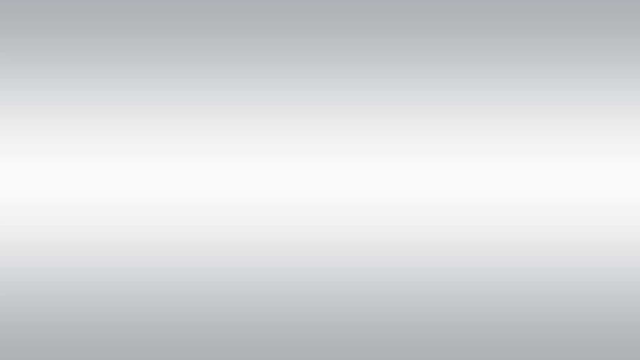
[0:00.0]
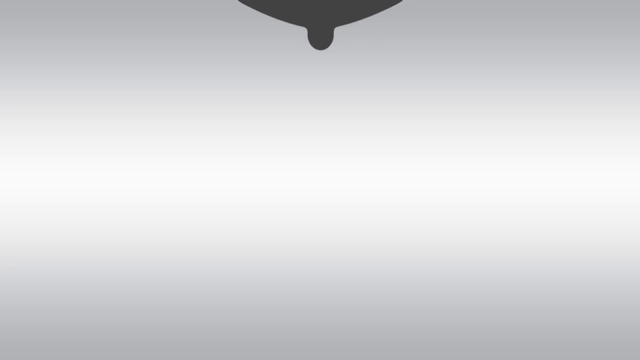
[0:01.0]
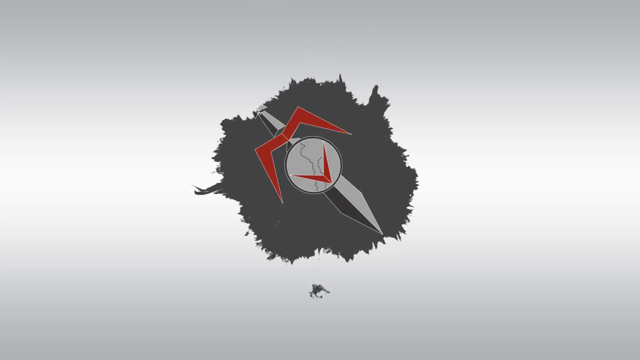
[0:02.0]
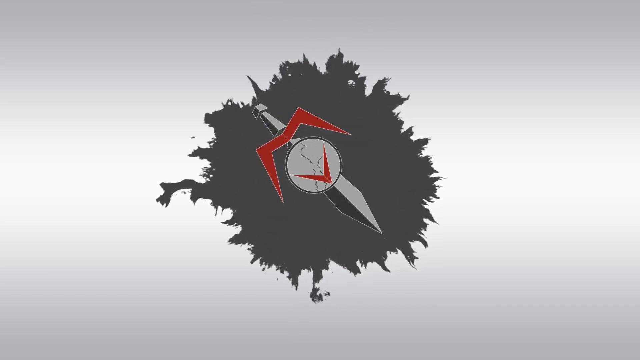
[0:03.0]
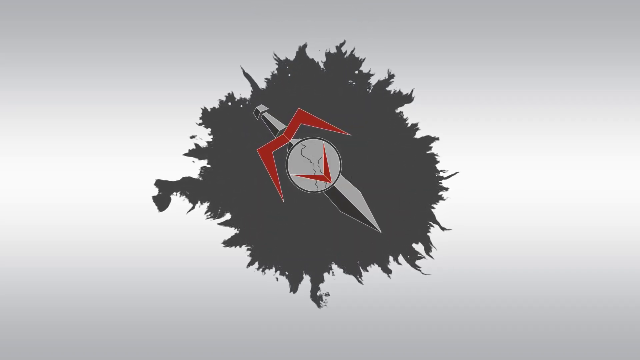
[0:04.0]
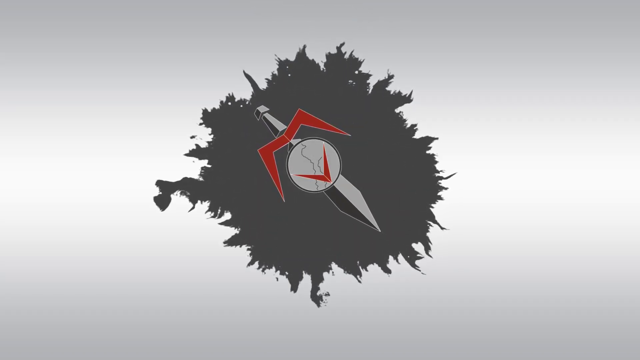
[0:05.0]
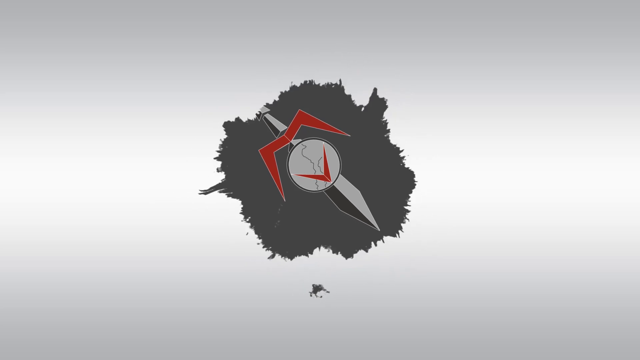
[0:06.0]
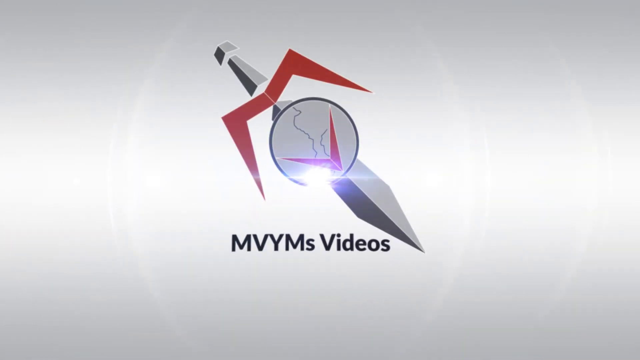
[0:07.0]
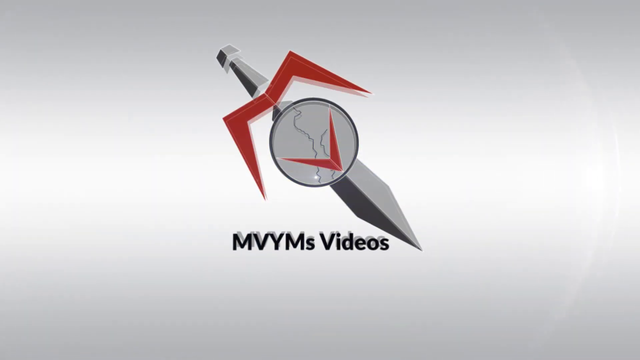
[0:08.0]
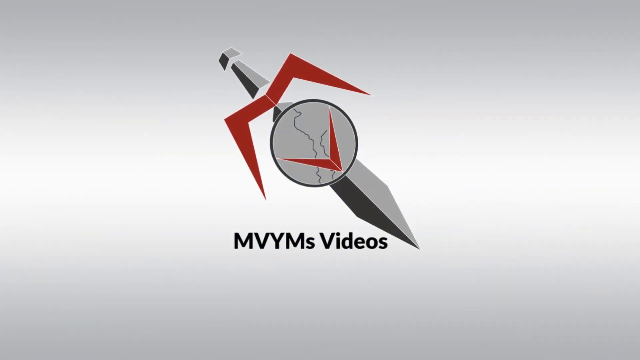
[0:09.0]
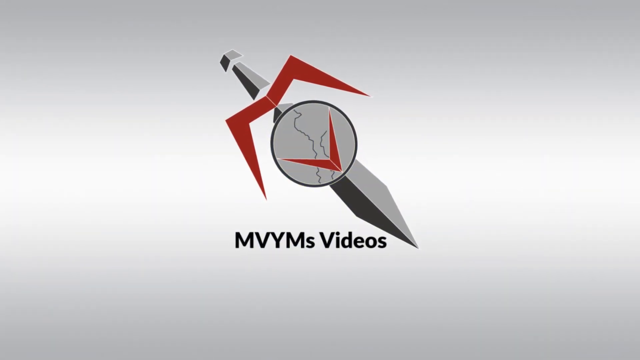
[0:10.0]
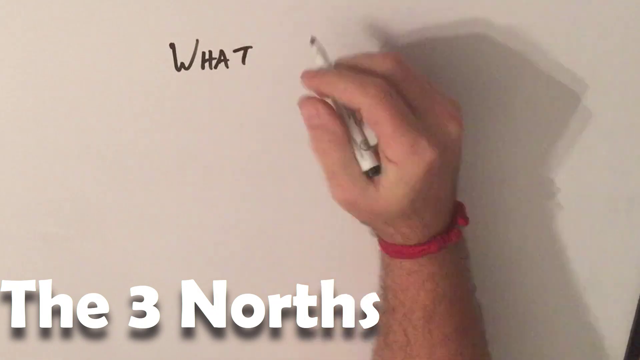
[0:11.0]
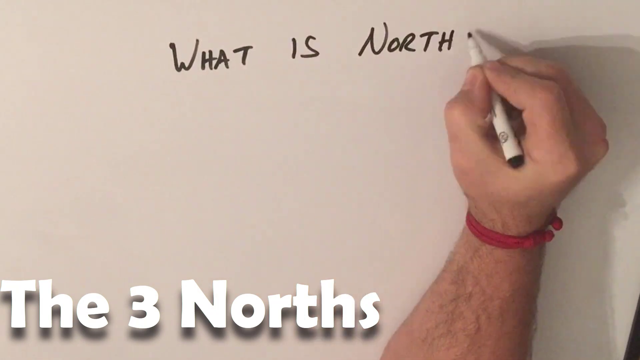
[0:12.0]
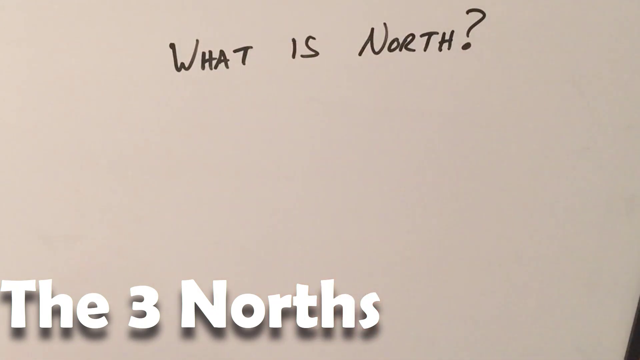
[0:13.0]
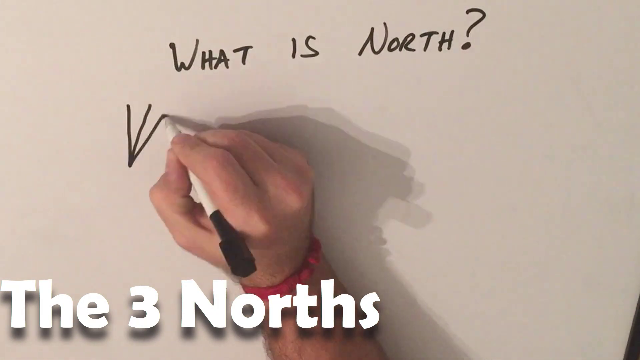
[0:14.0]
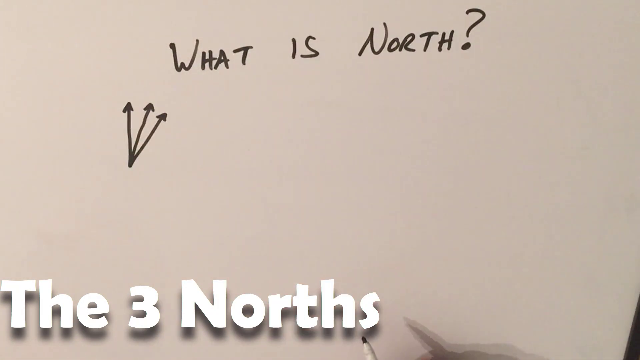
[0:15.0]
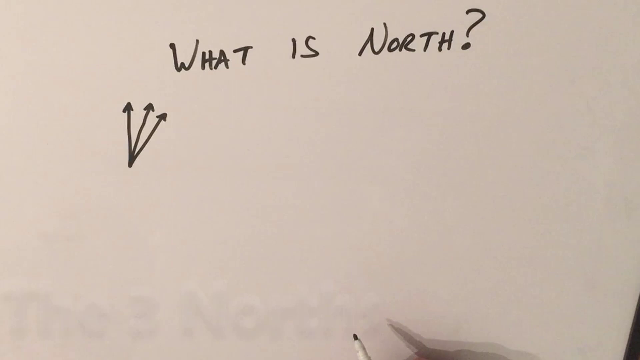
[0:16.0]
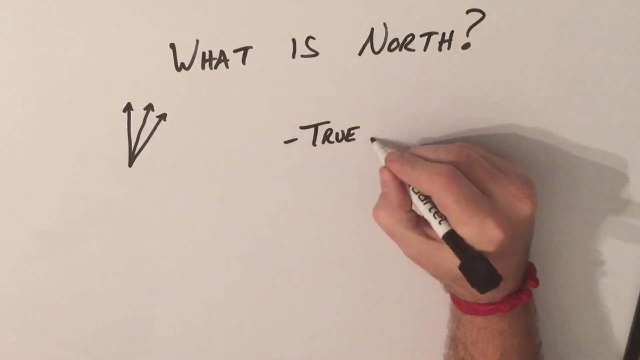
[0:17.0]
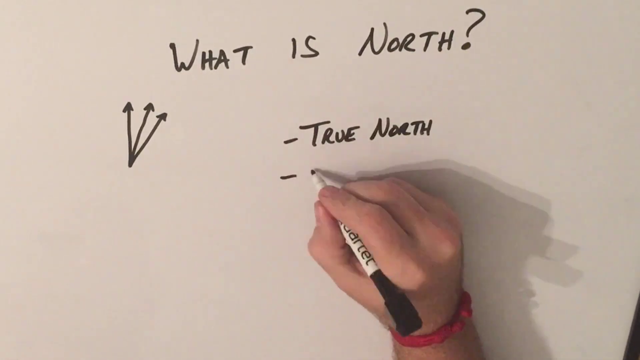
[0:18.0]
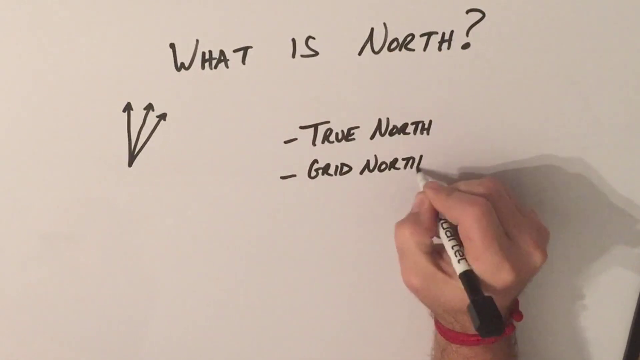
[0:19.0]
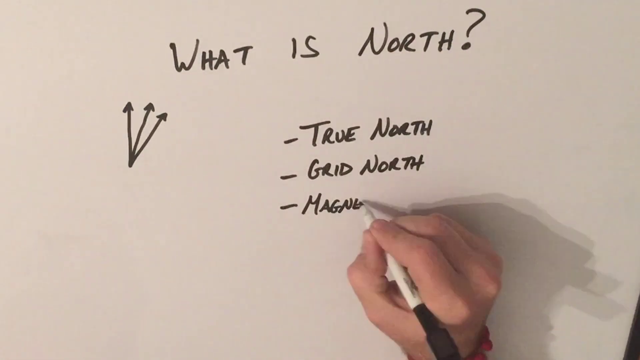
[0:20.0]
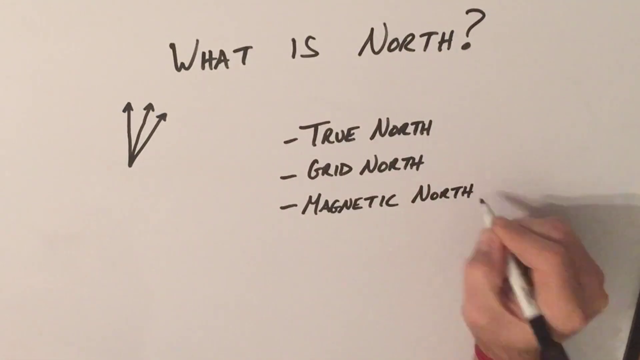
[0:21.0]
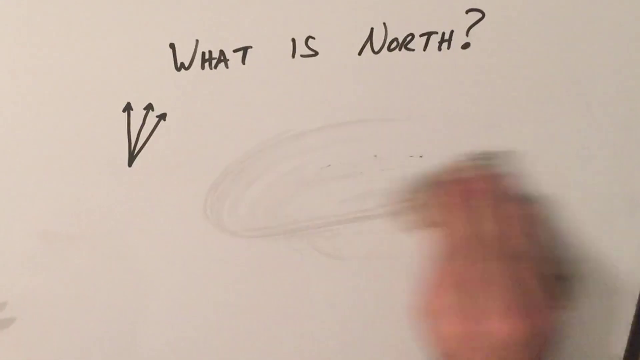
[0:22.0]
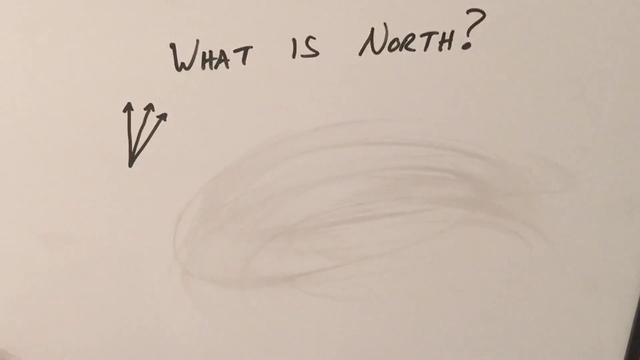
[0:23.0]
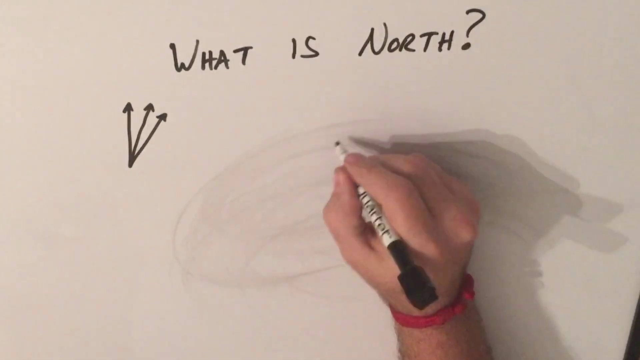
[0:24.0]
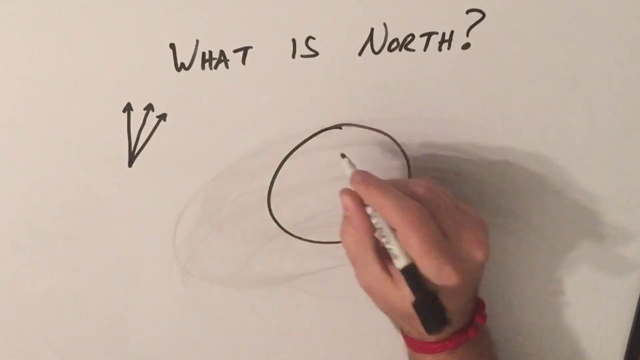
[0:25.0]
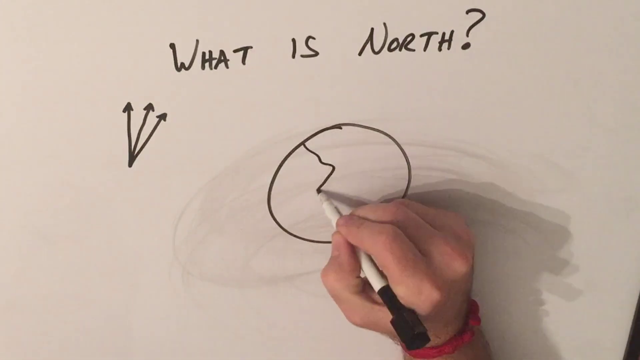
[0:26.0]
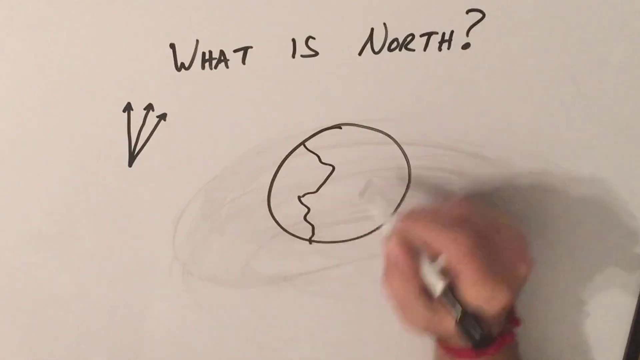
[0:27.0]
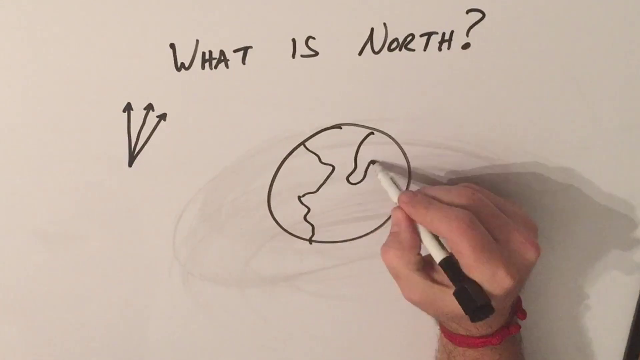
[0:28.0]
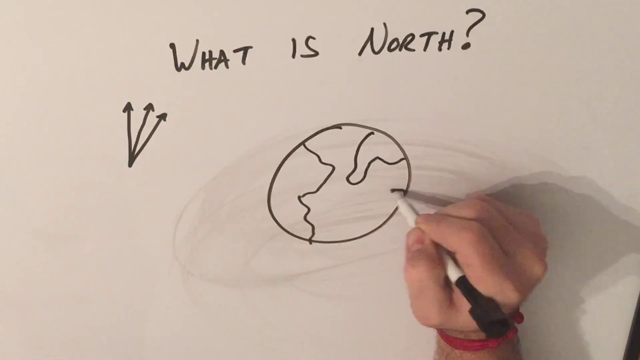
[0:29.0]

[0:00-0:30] The video opens on a white screen as a sort of gray circle comes into the top of the screen. A drip comes off it, falls onto the background and spreads out into a gray splotch. Inside the splotch is what looks like a compass point, or almost a sword or blade, pointing sort of to the southeast, along with the text "MVYM's videos". Next comes a sort of whiteboard, where a hand with a marker writes "what is north". The hand draws three arrows sort of pointing up, then writes the dot points "true north", "grid north" and "magnetic north". These are erased, and the hand draws a circle that looks like it is the planet Earth, adding some continents to it.